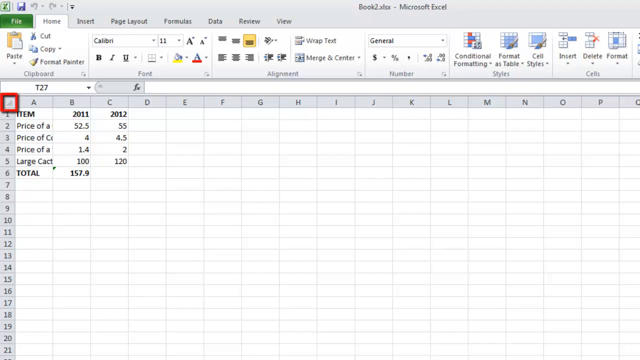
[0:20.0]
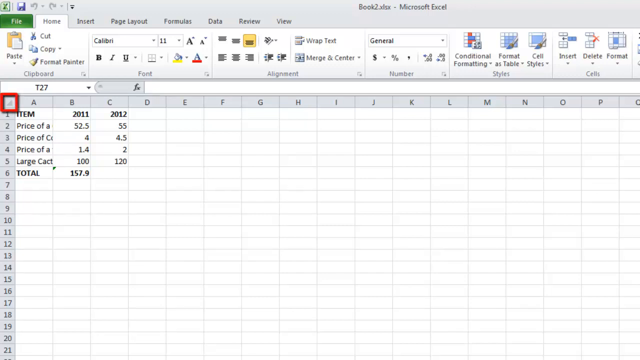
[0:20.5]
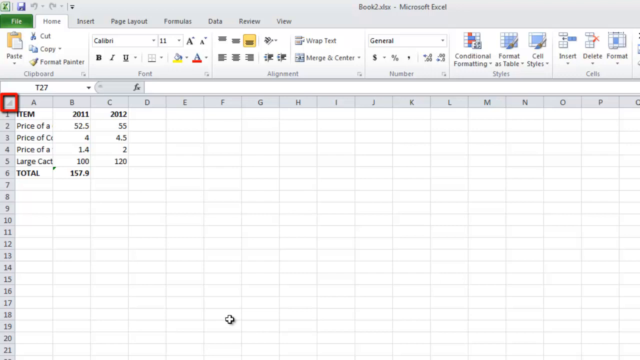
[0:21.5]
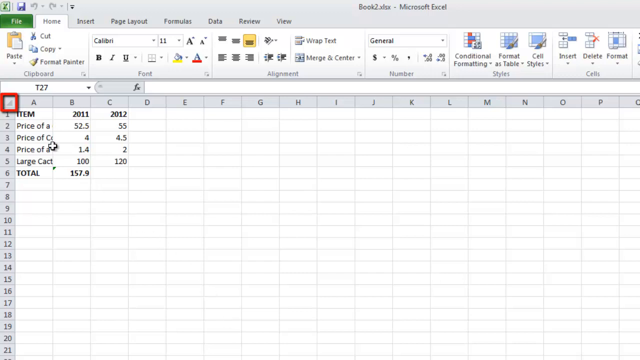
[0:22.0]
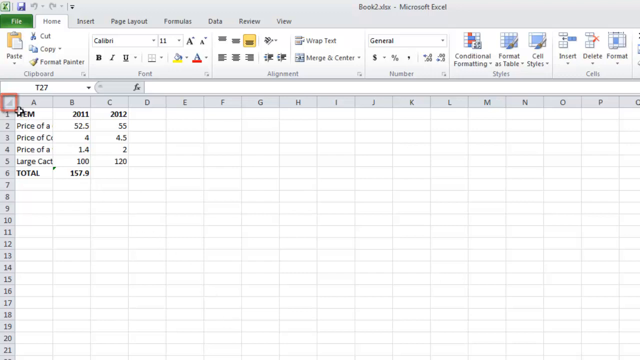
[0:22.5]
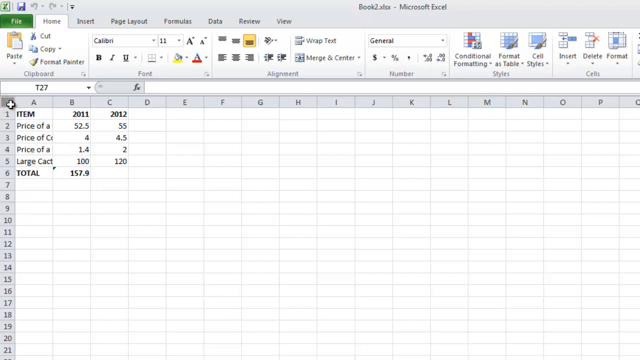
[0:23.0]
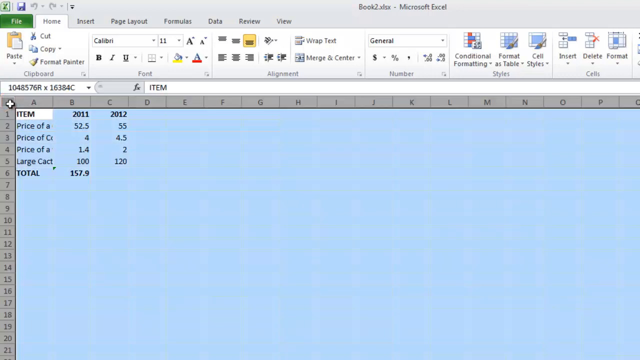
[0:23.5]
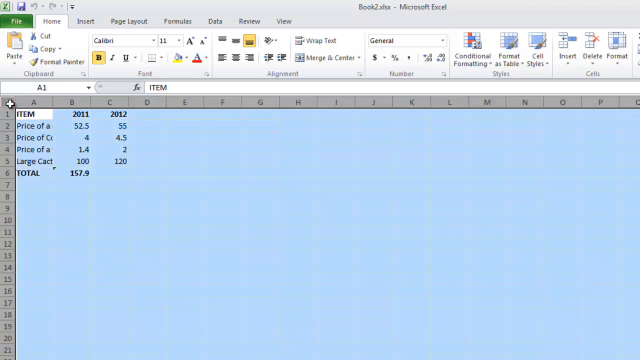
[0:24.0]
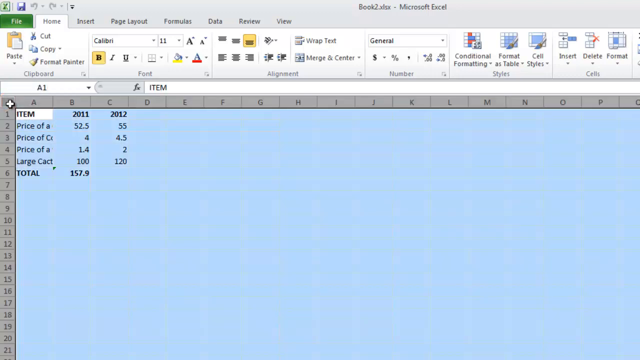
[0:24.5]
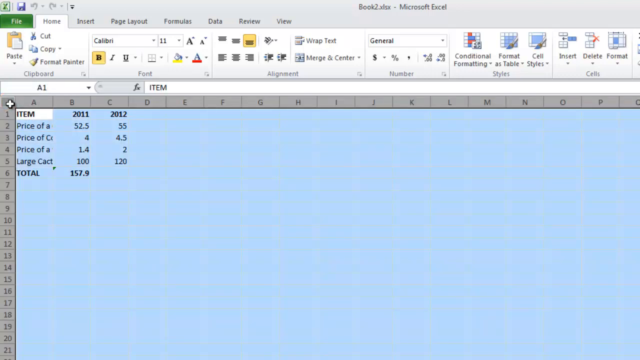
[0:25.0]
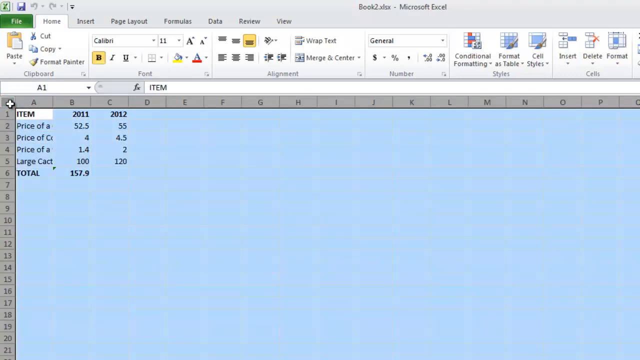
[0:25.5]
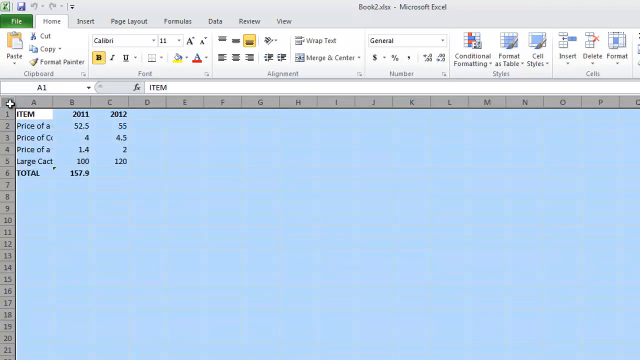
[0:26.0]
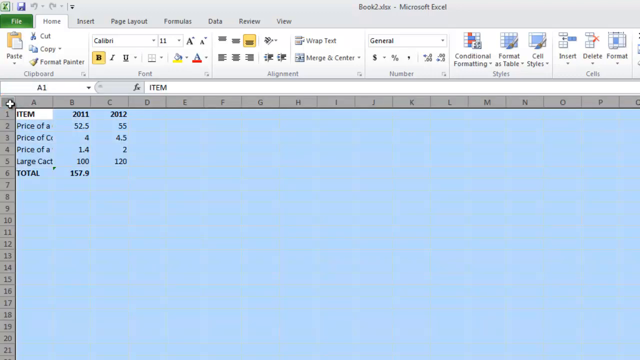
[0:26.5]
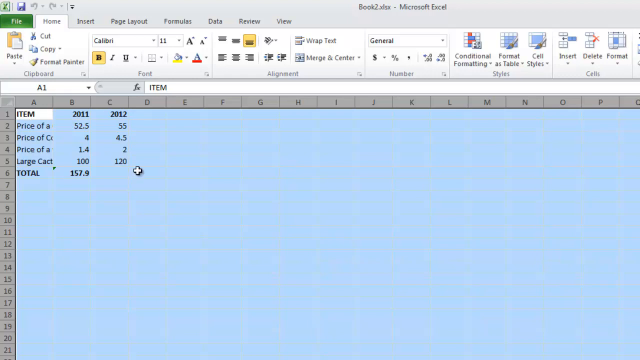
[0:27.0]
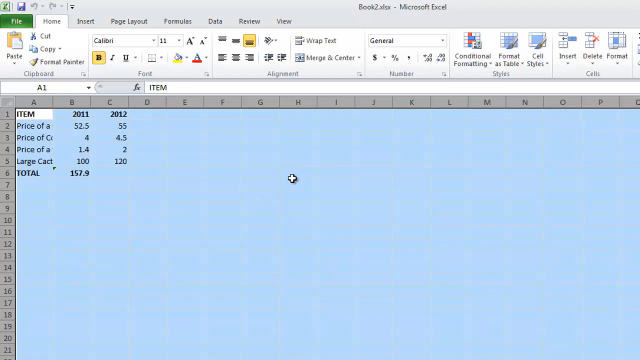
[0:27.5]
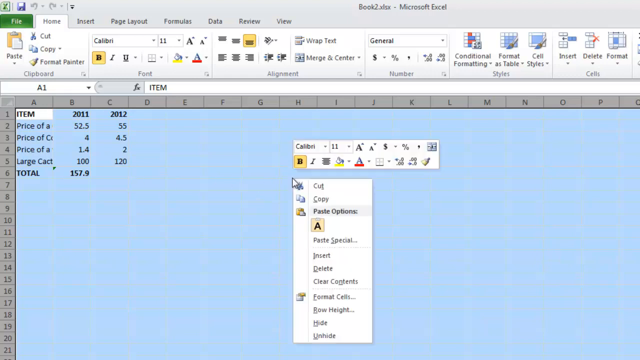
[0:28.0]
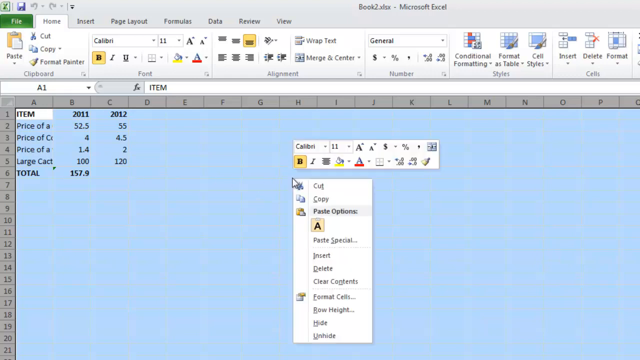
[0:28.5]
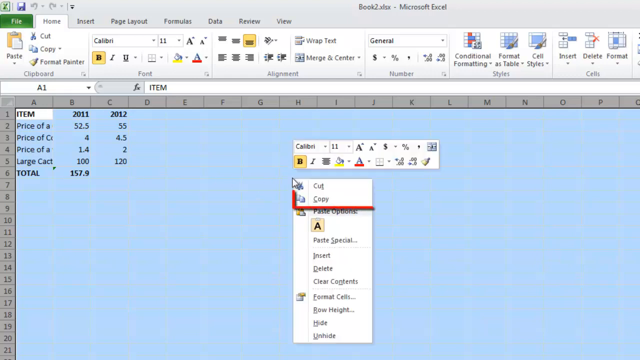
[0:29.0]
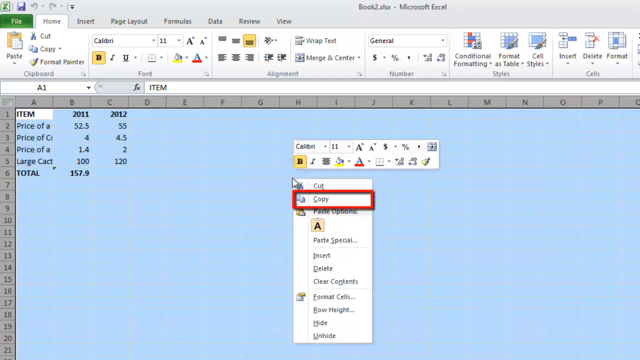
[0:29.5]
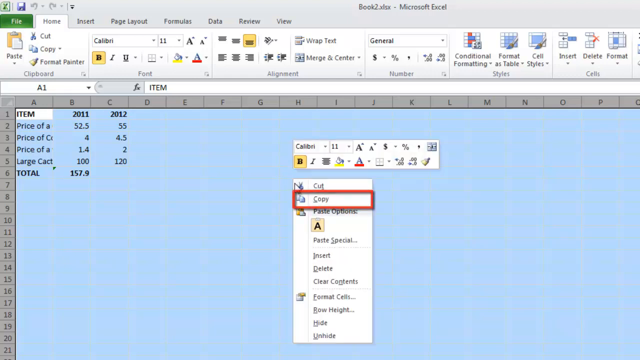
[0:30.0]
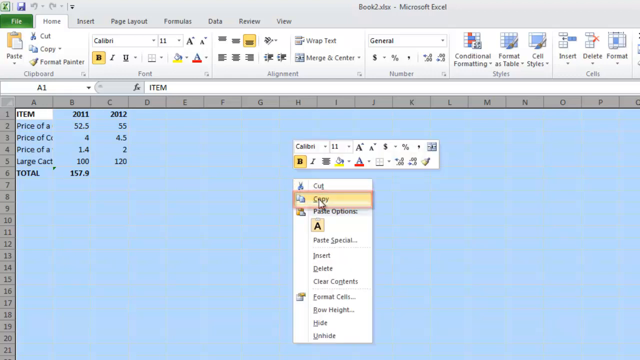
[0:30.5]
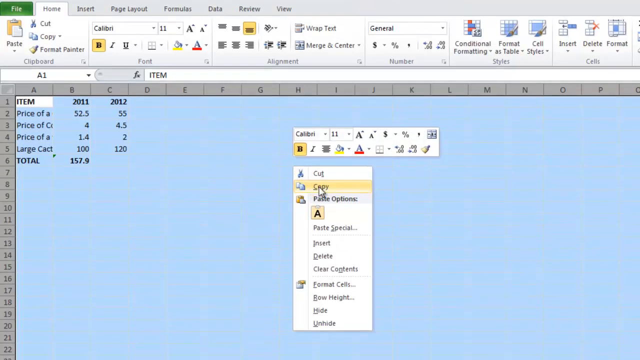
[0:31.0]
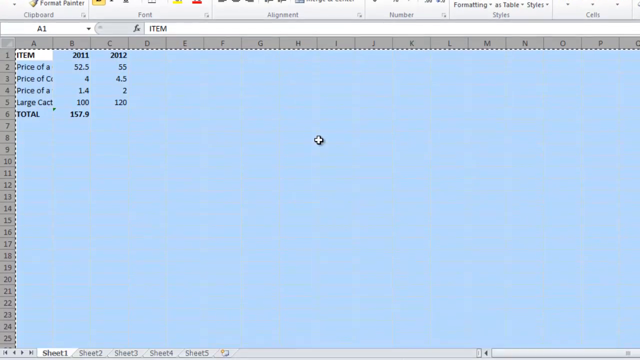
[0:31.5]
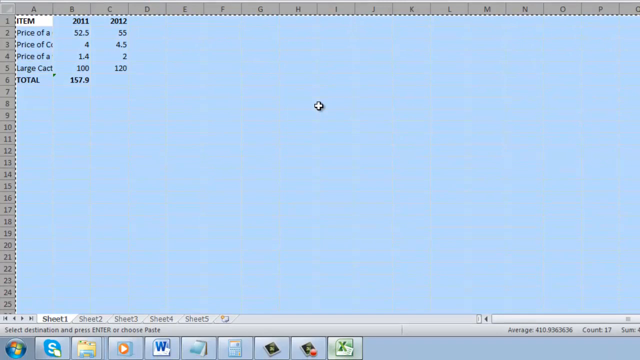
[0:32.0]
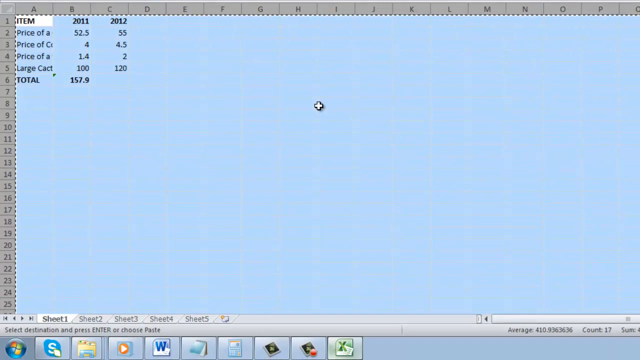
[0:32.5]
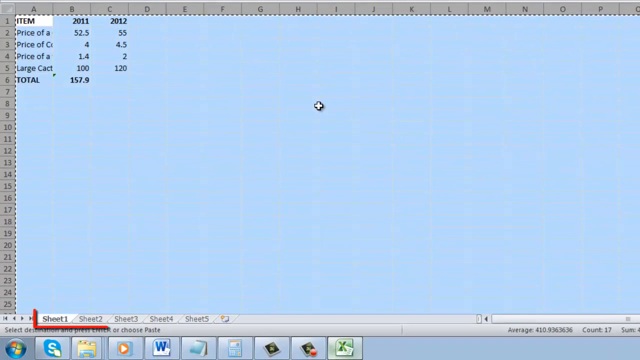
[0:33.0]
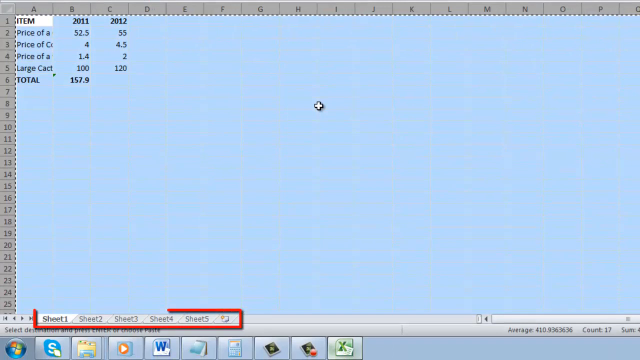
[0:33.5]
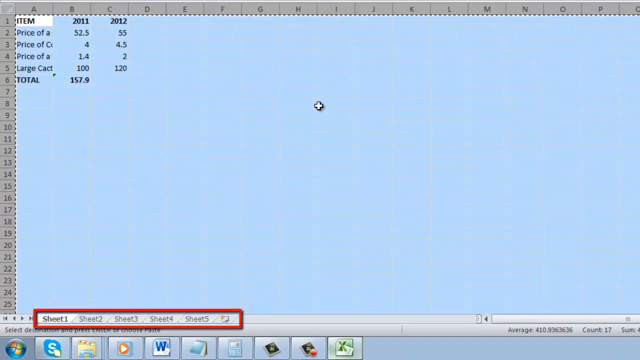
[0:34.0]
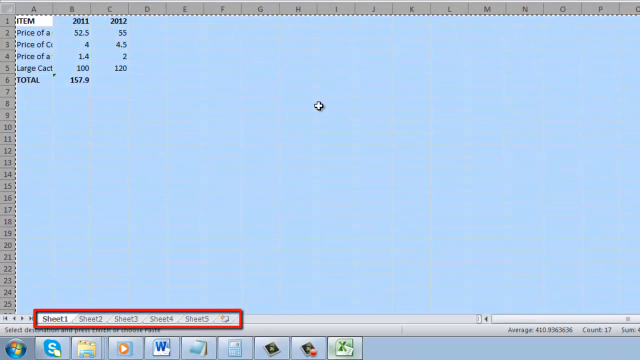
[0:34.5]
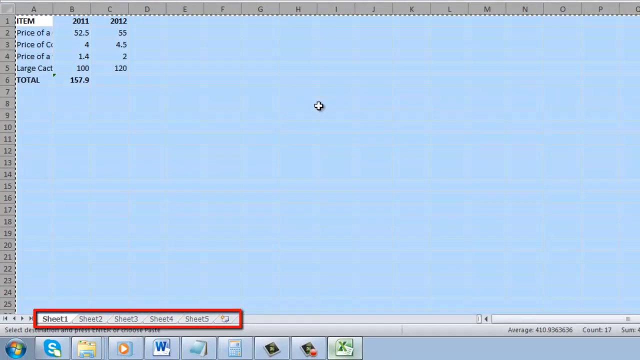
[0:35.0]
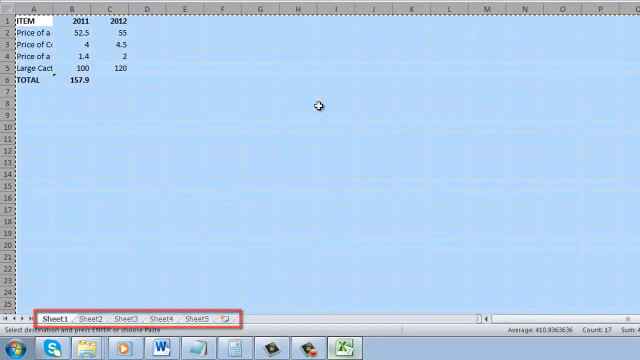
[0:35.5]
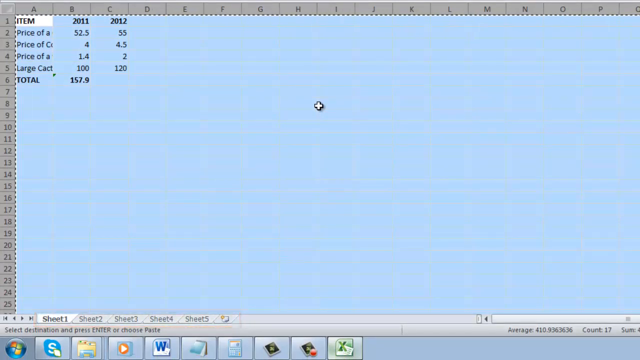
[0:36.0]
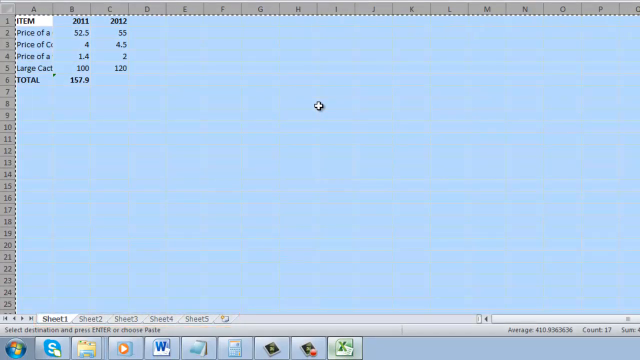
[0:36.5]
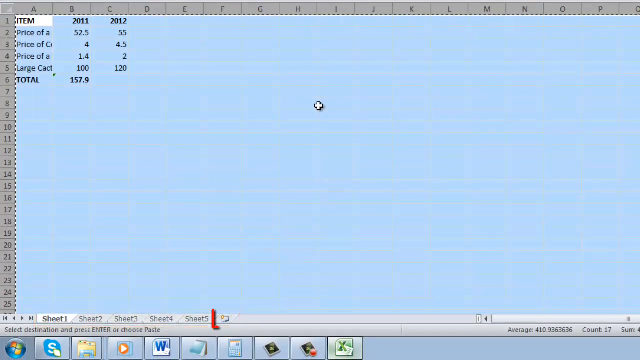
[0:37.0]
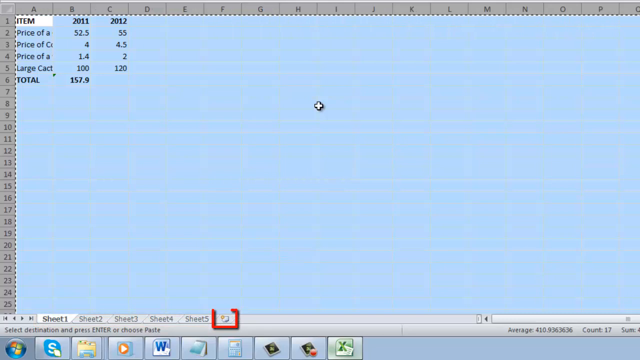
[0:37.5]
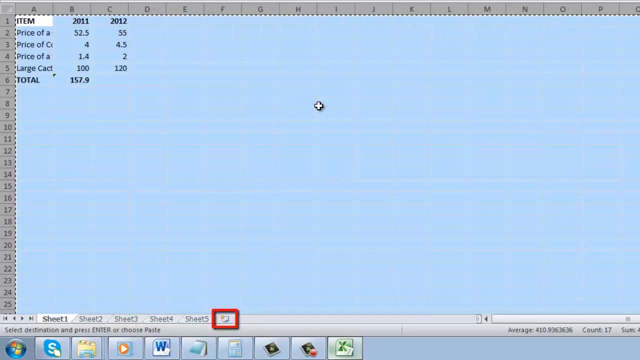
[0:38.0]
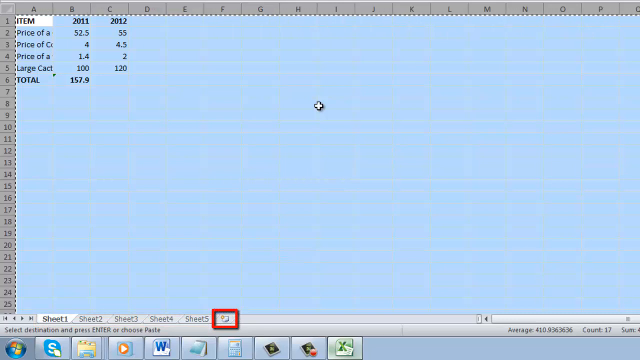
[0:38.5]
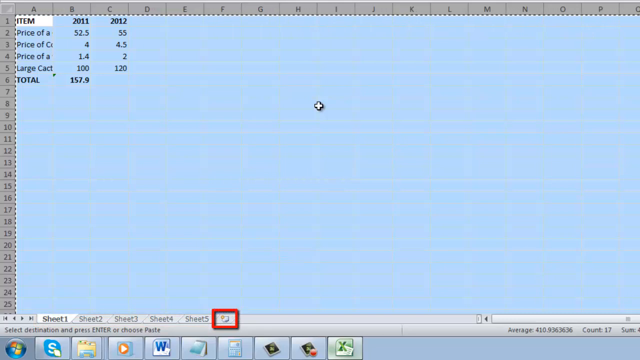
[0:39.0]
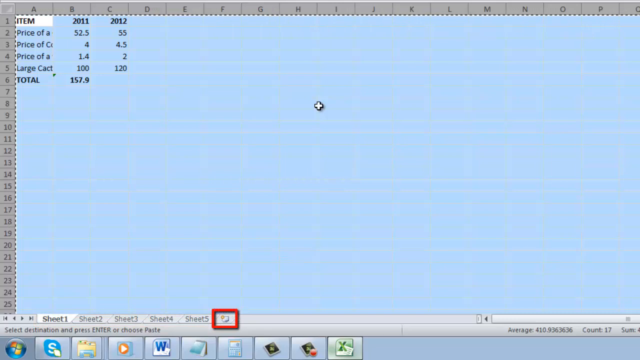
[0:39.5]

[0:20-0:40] The video appears to be someone probably teaching or learning Excel, seemingly recorded from either a projector or a desktop. The button above row 1 and to the left of column A is outlined in a red box, and the cursor clicks it, highlighting the entire sheet. The contents then appear to be right-clicked and copied. At the bottom of the screen, sheets 1 through 5 are listed, and the area where the sheets are is highlighted.